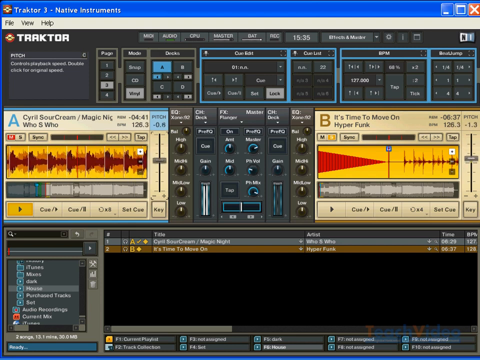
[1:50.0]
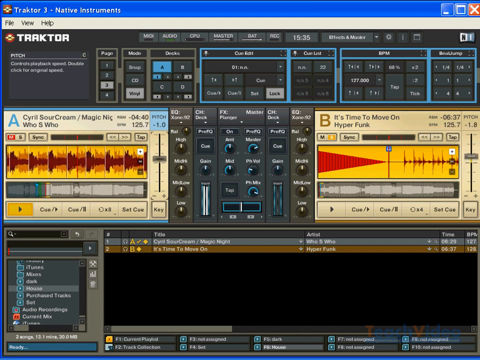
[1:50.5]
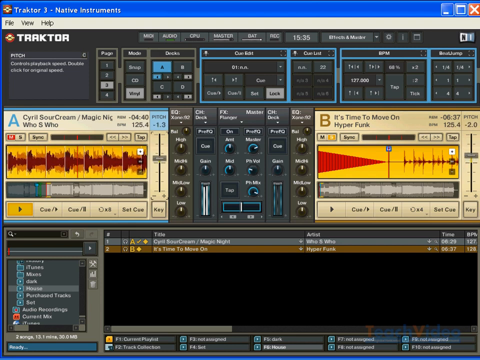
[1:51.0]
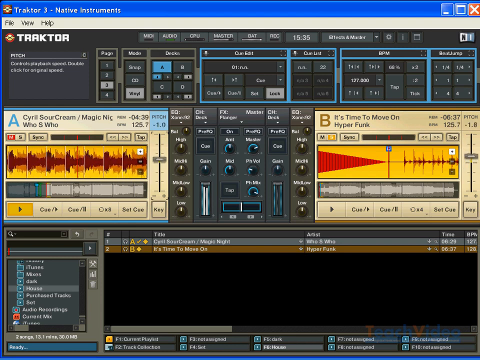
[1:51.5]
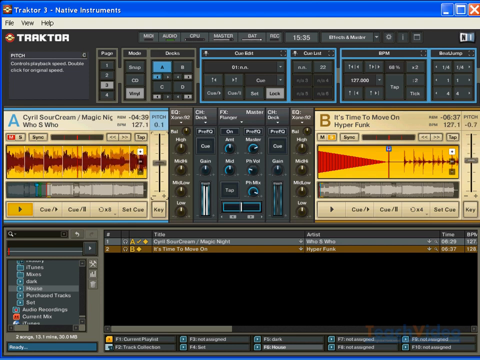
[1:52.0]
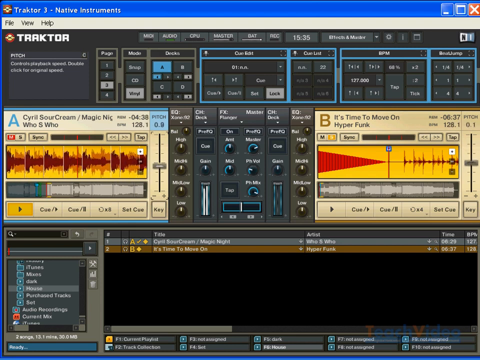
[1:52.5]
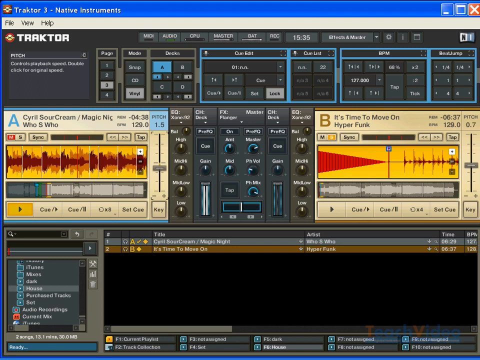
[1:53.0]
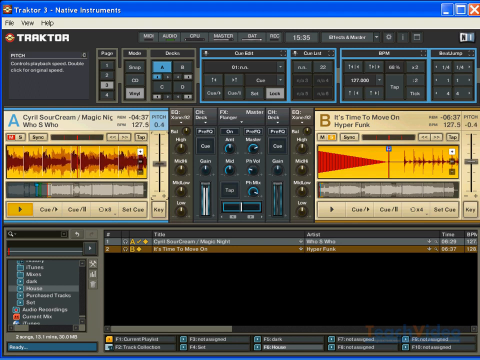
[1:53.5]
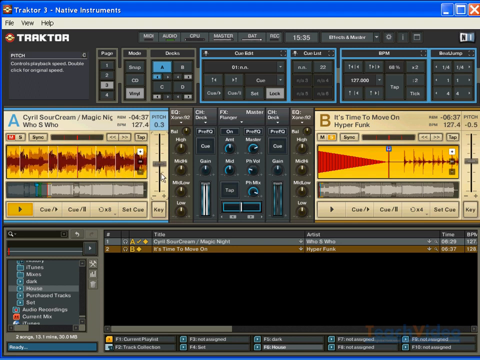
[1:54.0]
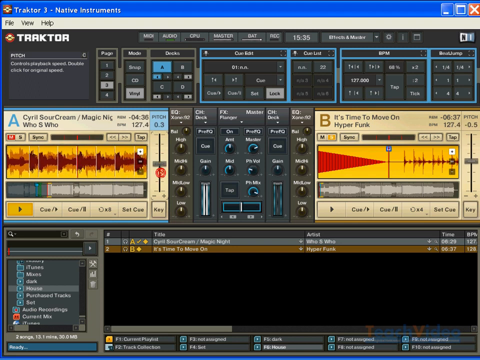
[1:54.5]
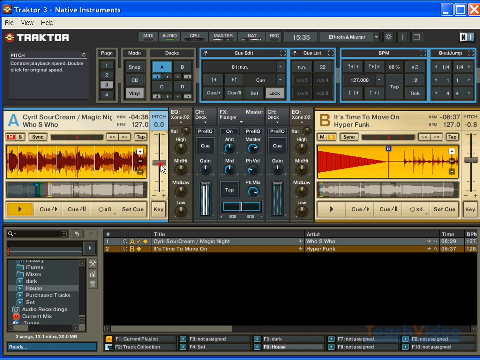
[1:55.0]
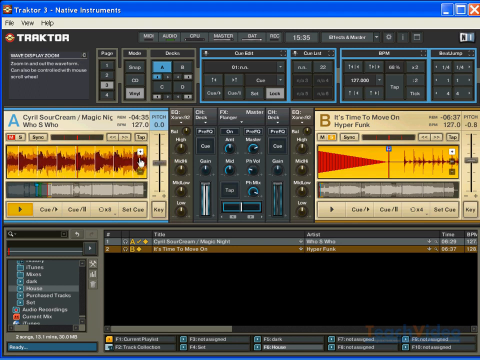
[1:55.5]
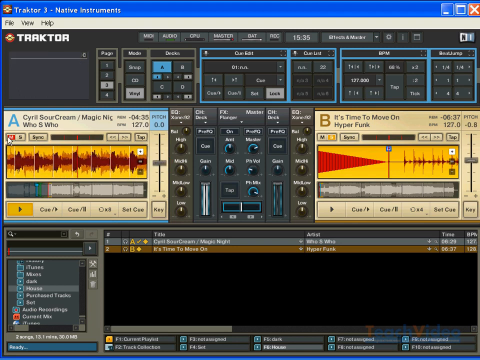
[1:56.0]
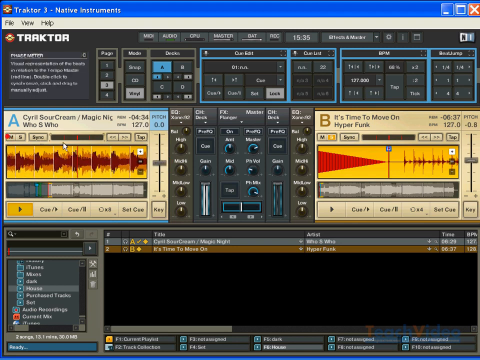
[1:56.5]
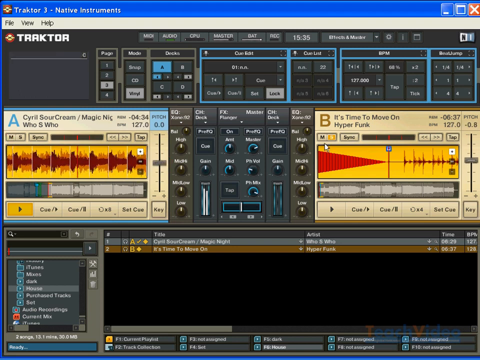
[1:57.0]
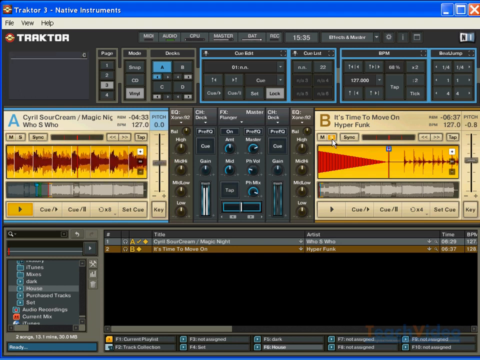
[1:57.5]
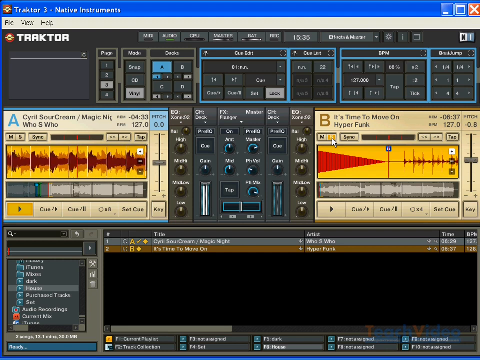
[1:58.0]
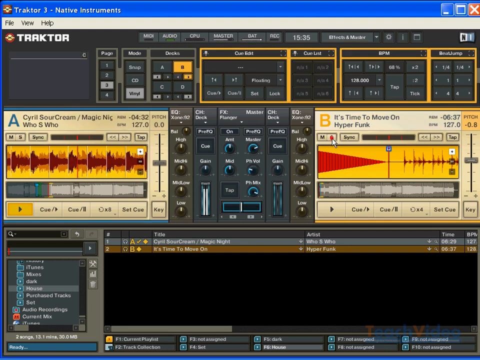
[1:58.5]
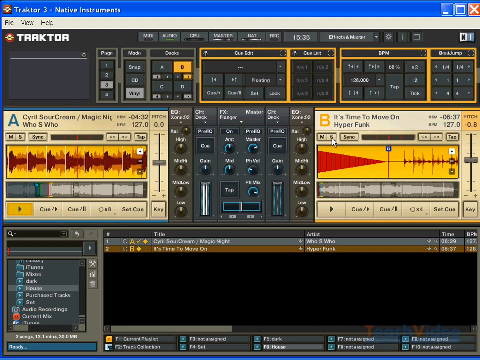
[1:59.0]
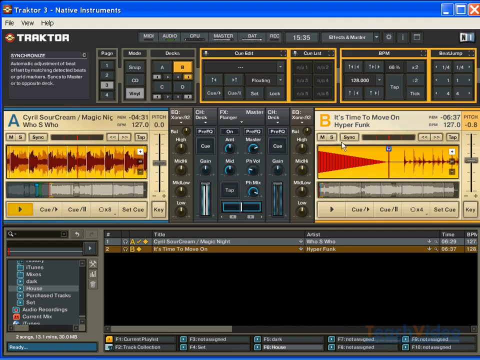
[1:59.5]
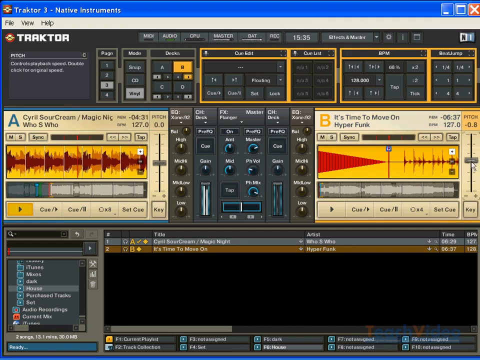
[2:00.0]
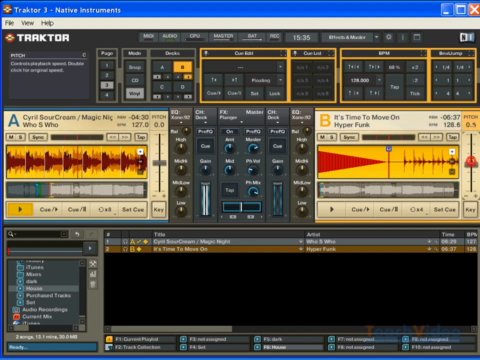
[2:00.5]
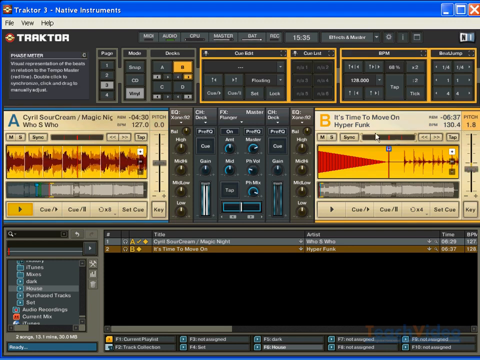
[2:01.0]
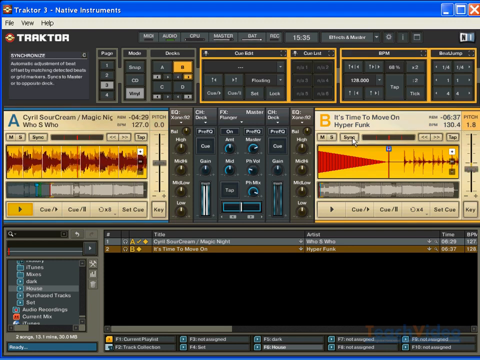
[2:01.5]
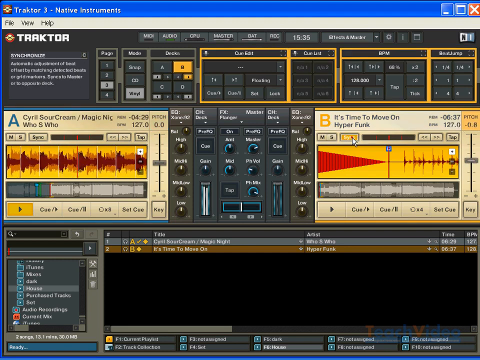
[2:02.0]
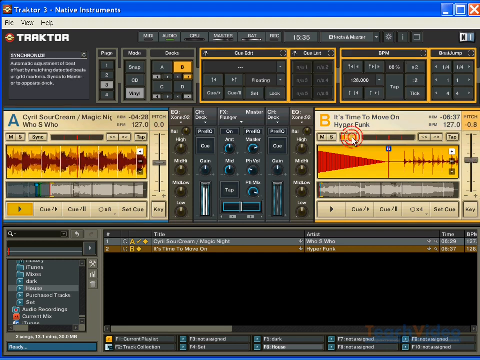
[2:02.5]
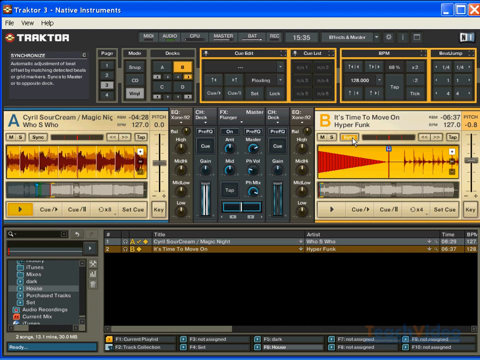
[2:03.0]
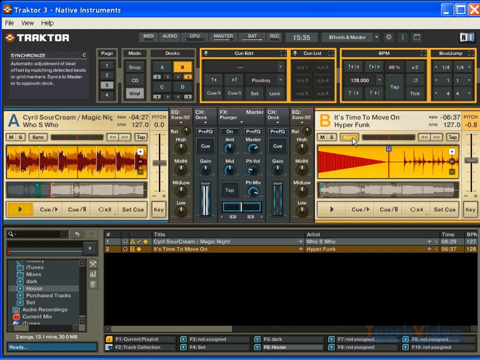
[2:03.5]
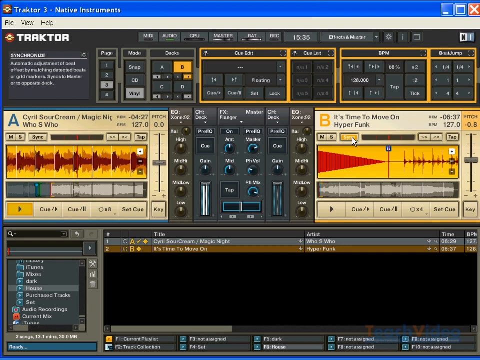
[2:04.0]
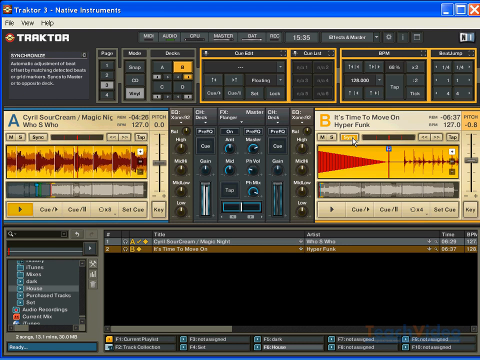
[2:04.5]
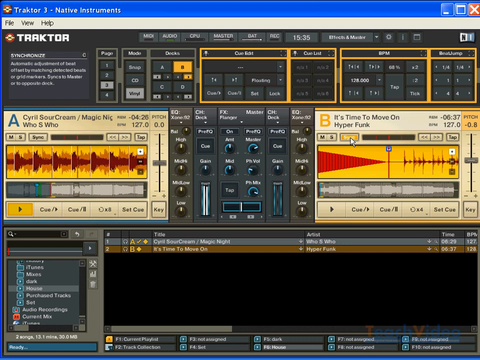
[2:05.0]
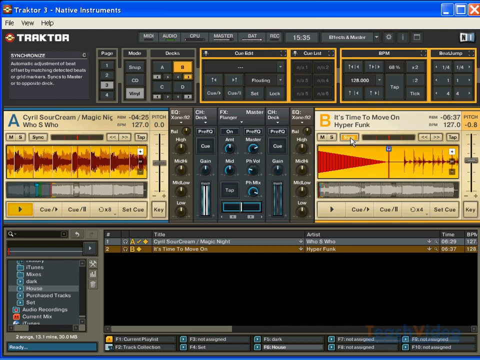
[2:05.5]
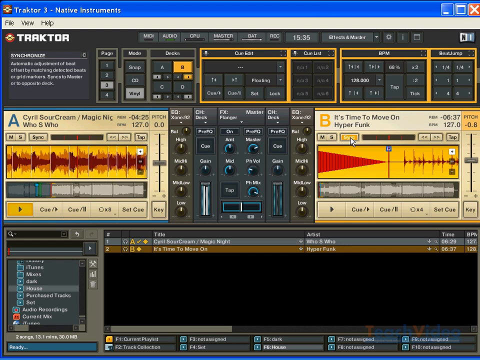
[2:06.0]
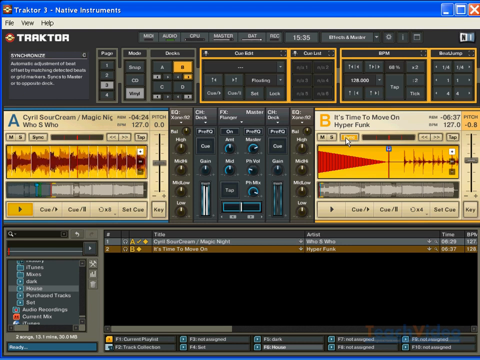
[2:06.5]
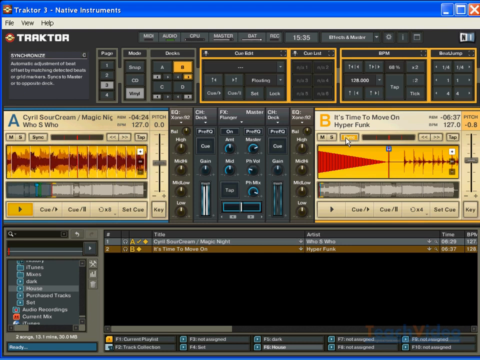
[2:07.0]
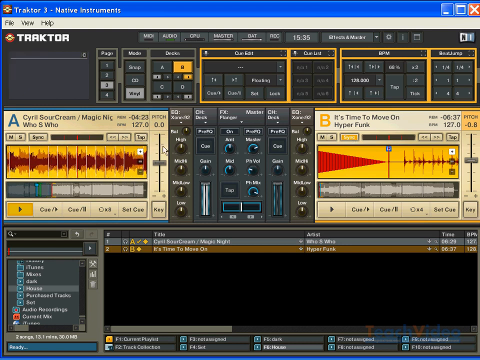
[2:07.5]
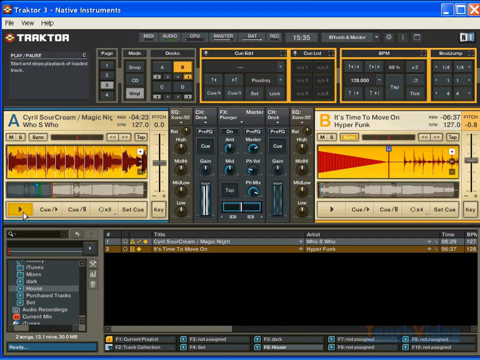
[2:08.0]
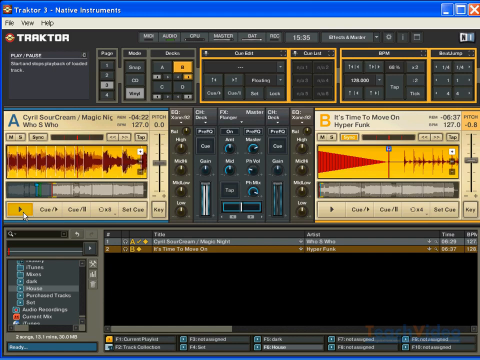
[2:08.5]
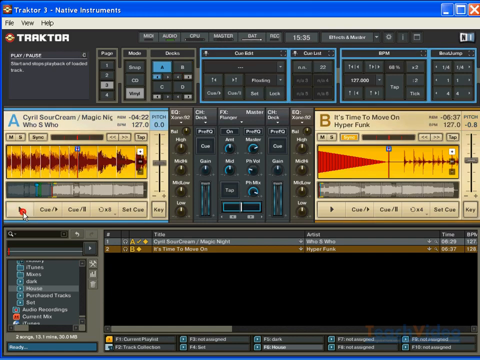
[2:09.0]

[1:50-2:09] In the same audio program, the mouse moves back to the S button on the right faded yellow box and clicks it off. It then moves the pitch dial on the right box down, and this time only that dial moves; the pitch dial on the left does not. The mouse clicks a button to the right of the S button on the right box that says "sync", and it turns yellow. Finally the mouse moves to the play button on the left faded yellow box and clicks it off, so it is no longer highlighted, and the red sound waves in the yellow rectangle stop moving.